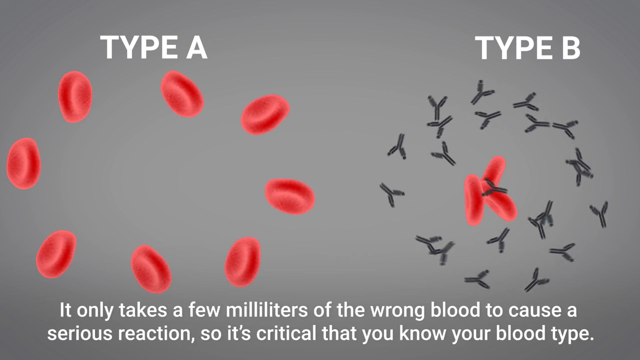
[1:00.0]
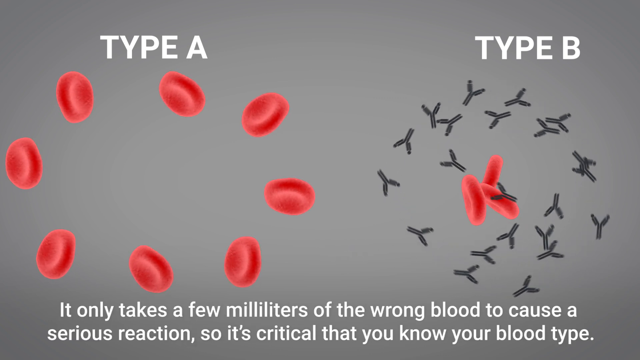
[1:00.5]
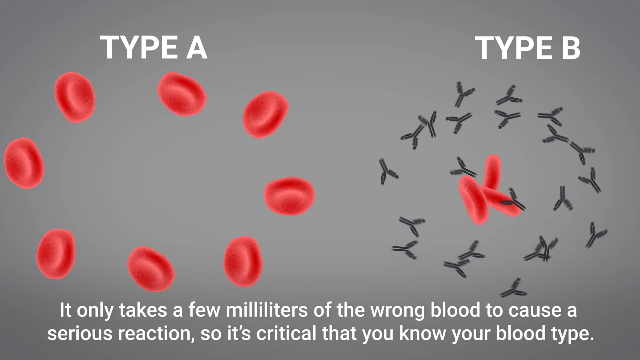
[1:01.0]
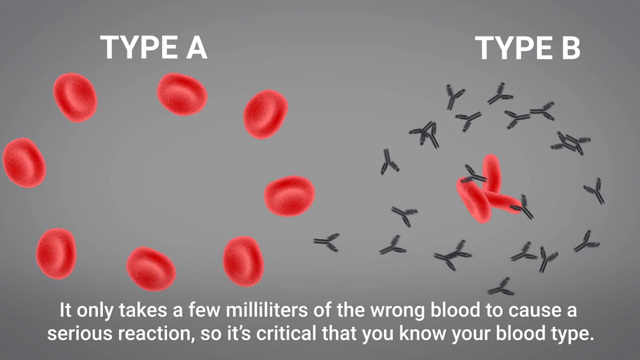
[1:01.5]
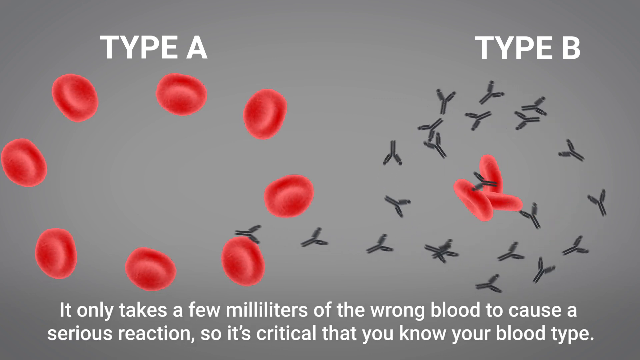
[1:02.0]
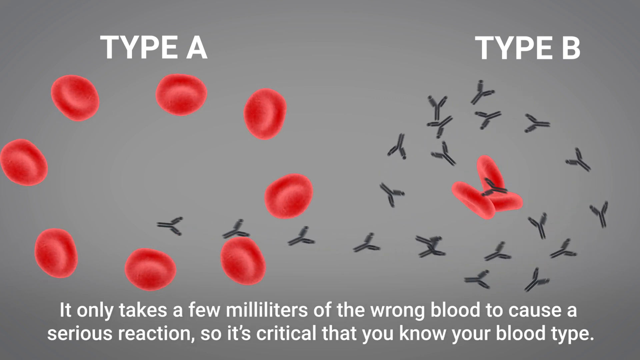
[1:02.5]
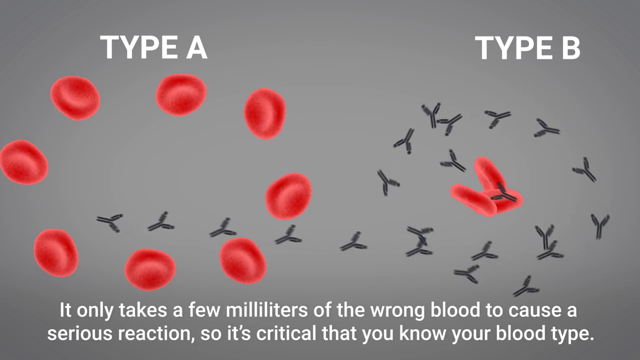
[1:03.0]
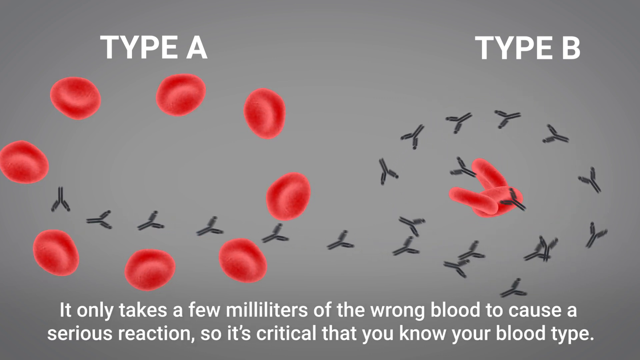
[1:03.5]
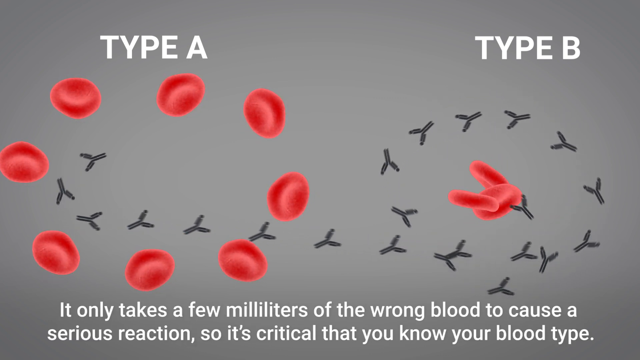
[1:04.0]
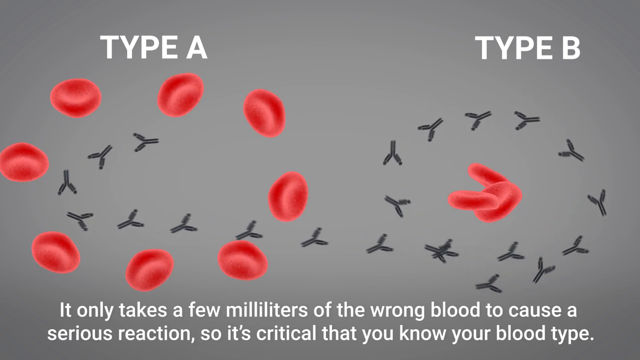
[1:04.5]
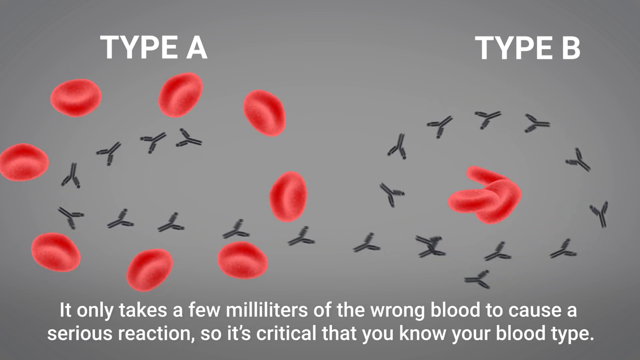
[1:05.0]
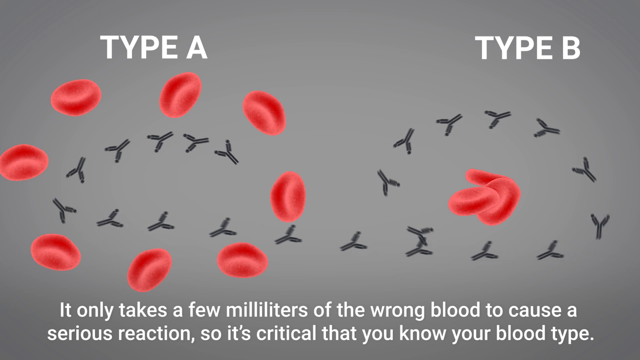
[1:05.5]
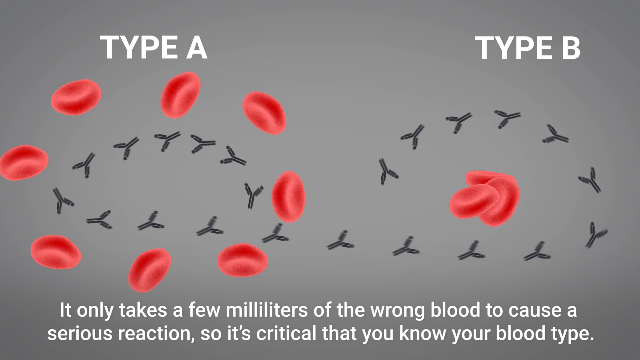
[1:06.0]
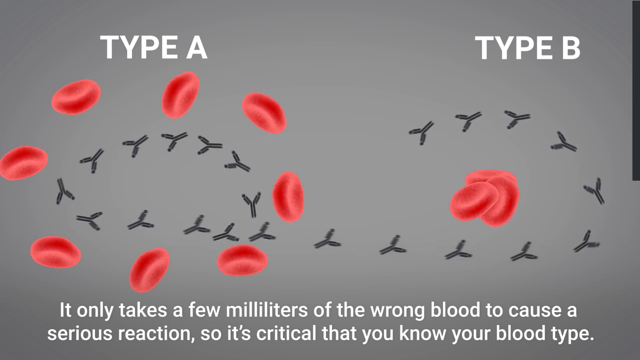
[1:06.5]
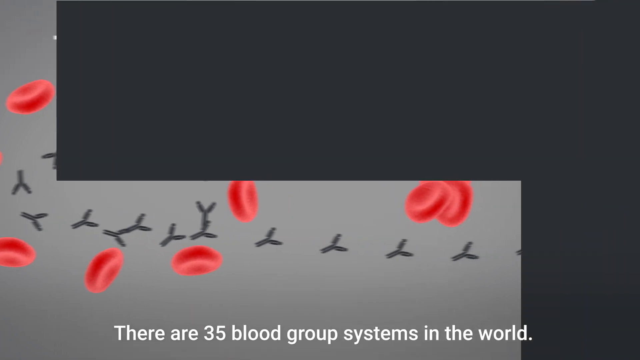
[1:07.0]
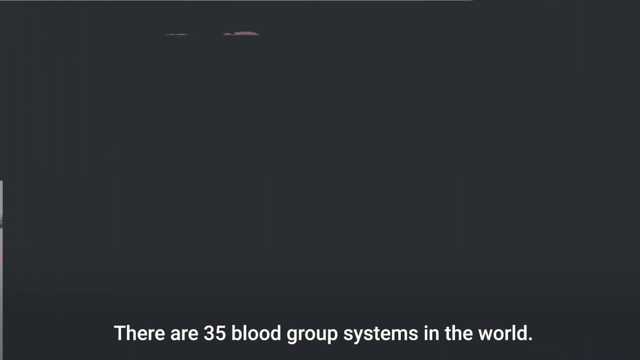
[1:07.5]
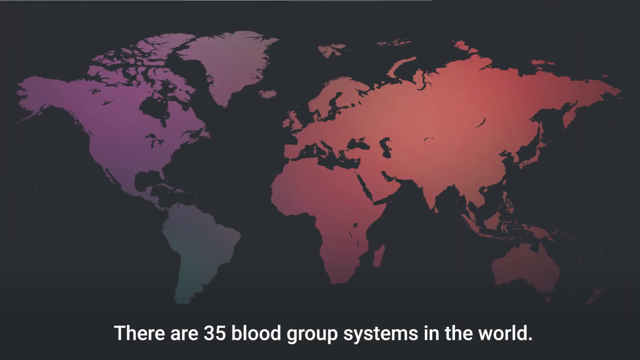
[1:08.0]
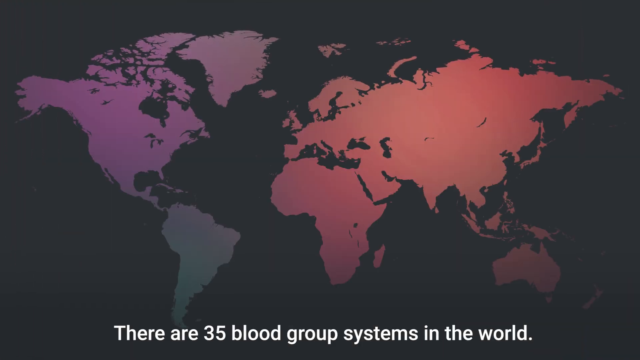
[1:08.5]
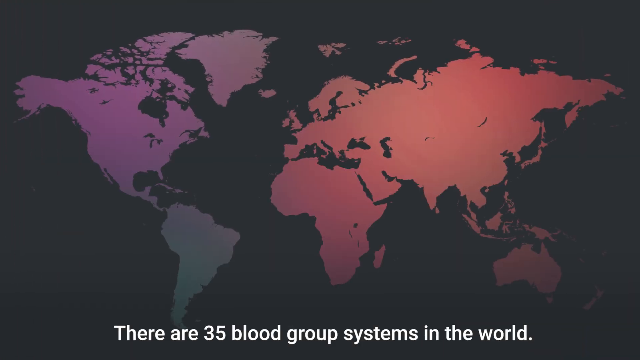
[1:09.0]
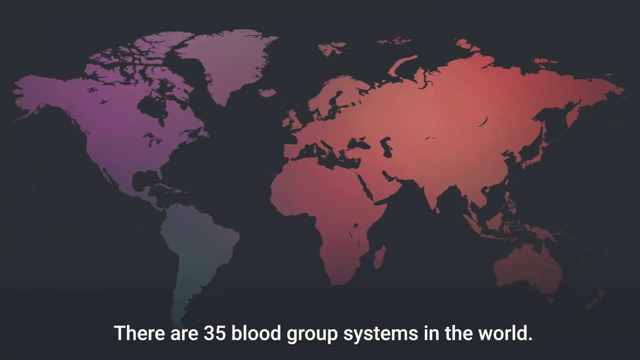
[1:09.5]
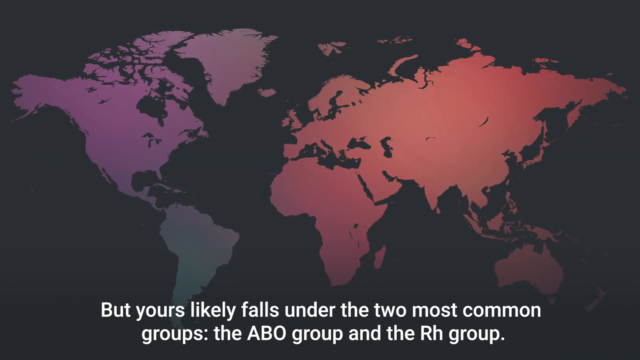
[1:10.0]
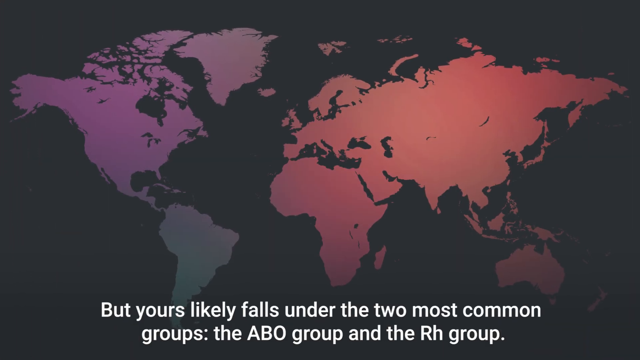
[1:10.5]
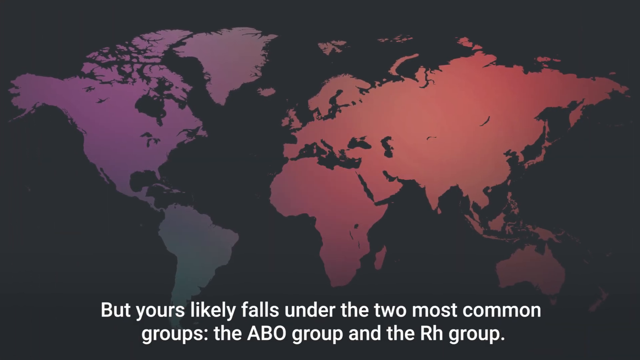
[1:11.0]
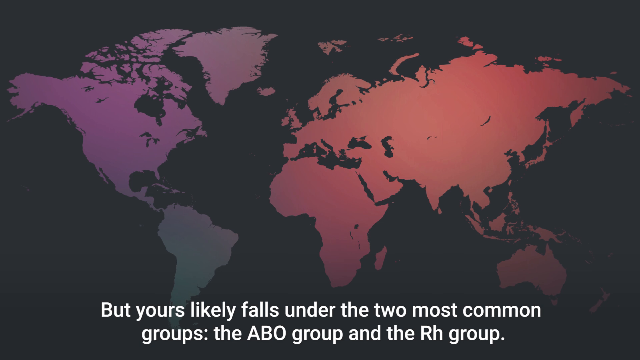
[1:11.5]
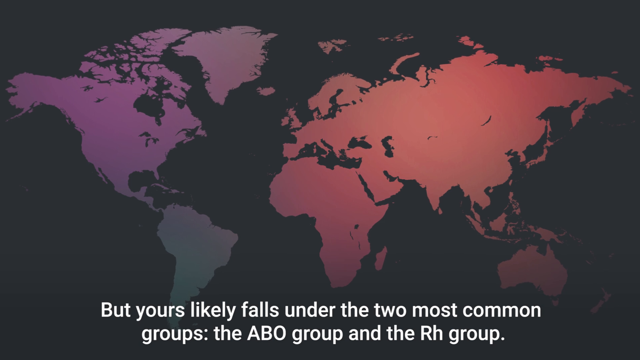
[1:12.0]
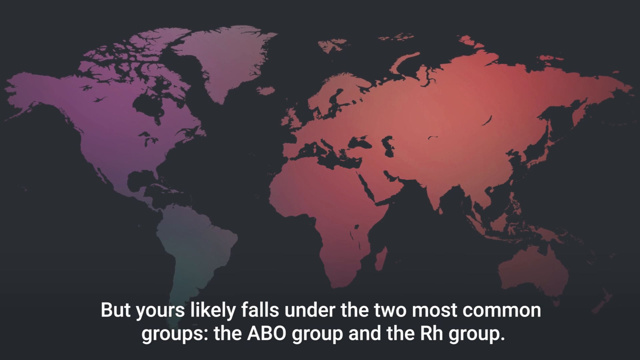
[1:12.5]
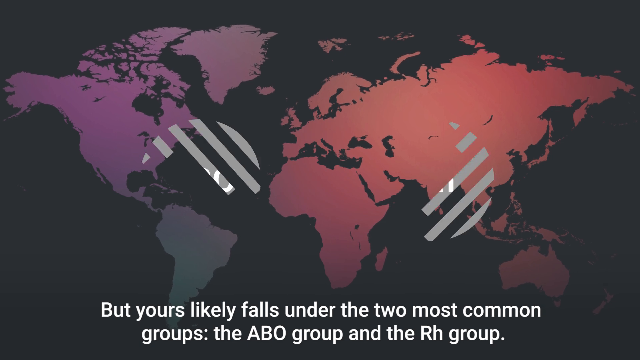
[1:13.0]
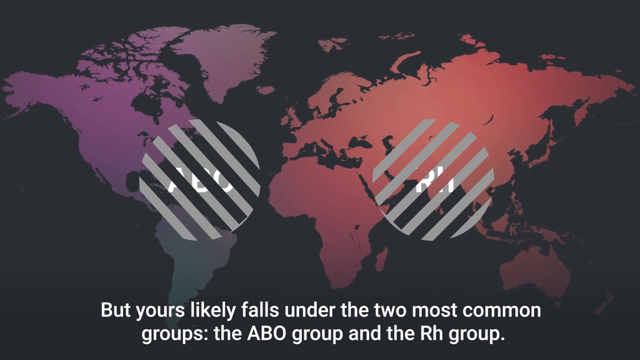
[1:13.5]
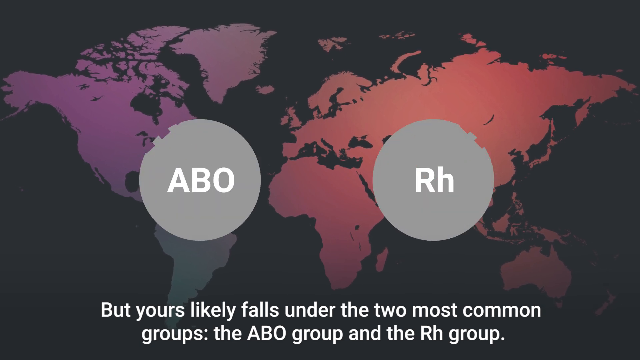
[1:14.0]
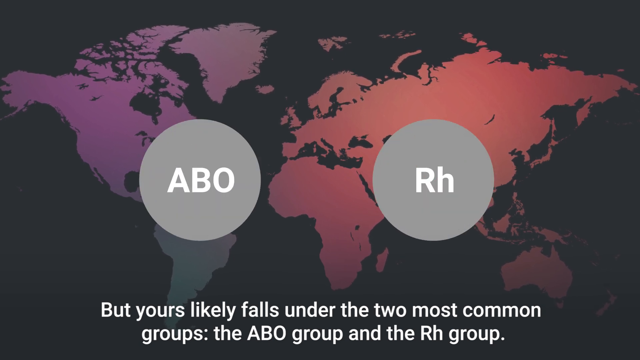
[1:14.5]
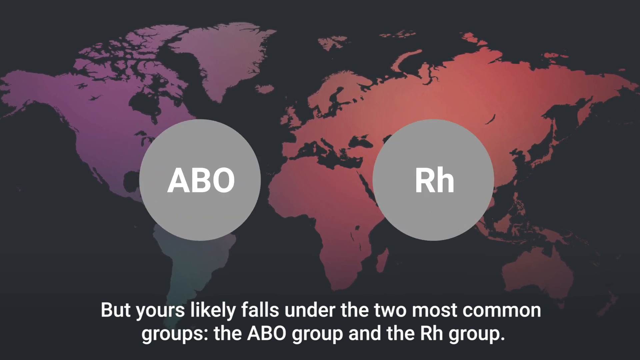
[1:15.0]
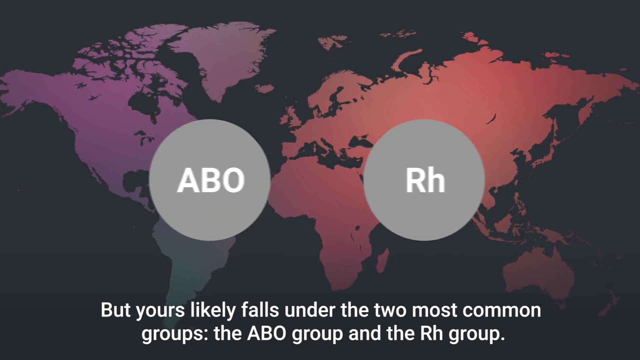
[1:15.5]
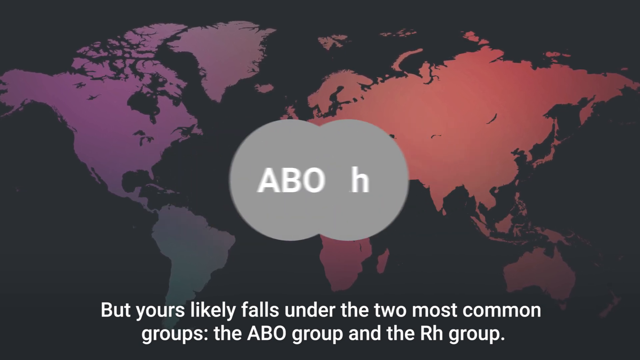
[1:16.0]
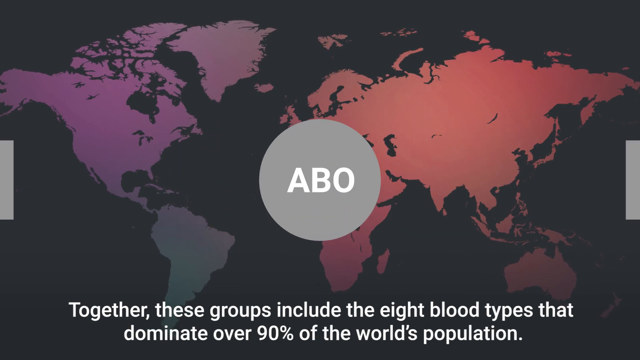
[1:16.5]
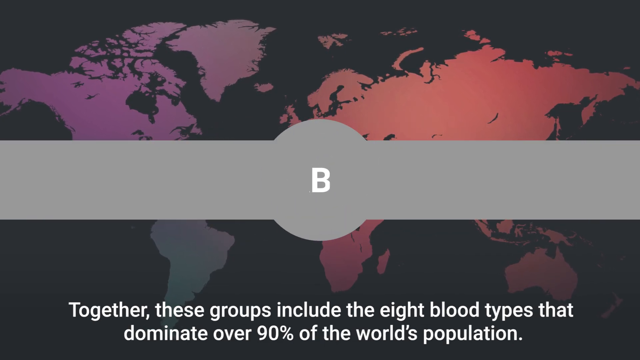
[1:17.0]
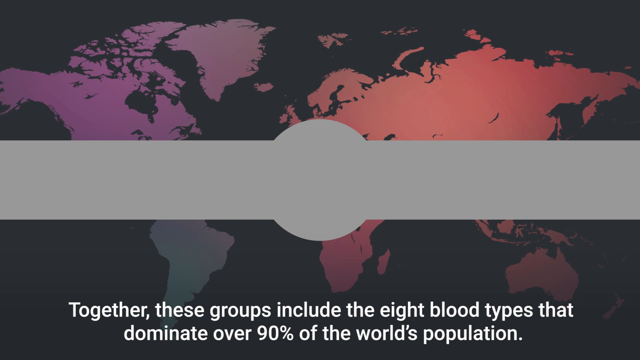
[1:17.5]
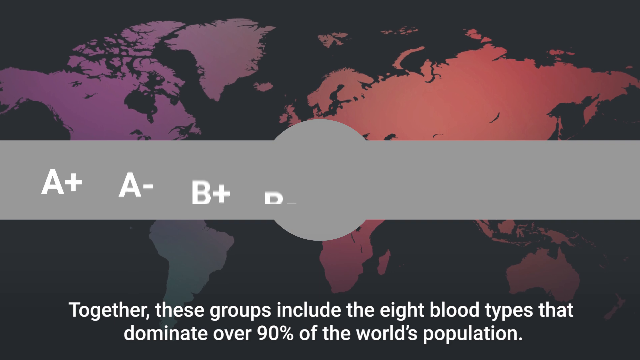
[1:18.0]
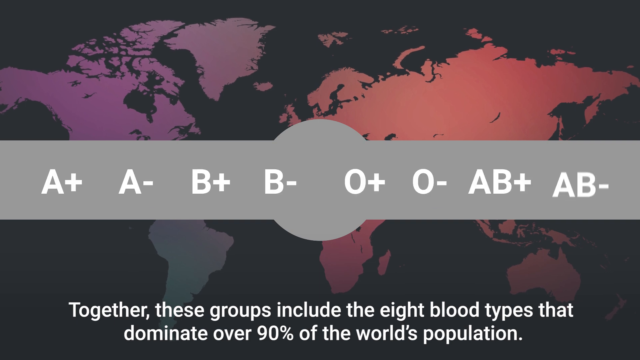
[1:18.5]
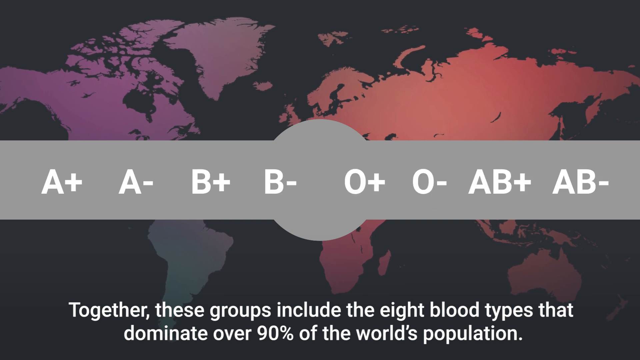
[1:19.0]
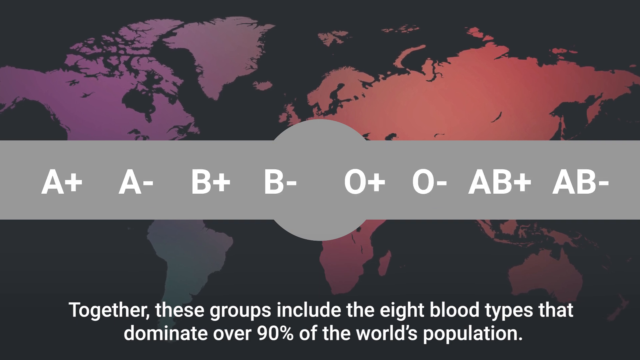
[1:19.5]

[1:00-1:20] The same chicken-feet shapes go around counterclockwise around the blood type B side, then move over to type A. Text at the bottom says "it only takes a few millimeters of the wrong blood to cause a serious reaction. So it's critical that you know your blood type." A world map appears with text at the bottom reading "there are 35 blood group systems in the world." The text then refers to "the two most common groups," and two groups are shown, one on the left and one on the right, indicated by two gray circles containing ABO and RH. After that, all the different blood types are shown from left to right.